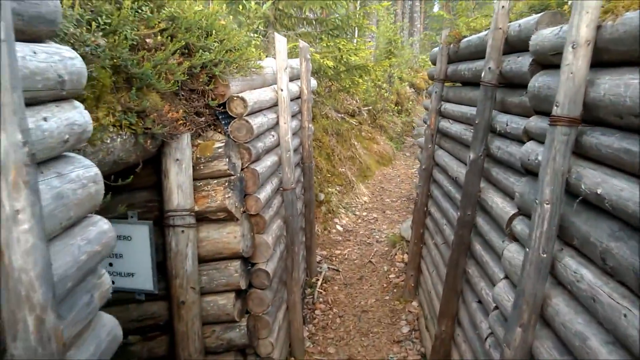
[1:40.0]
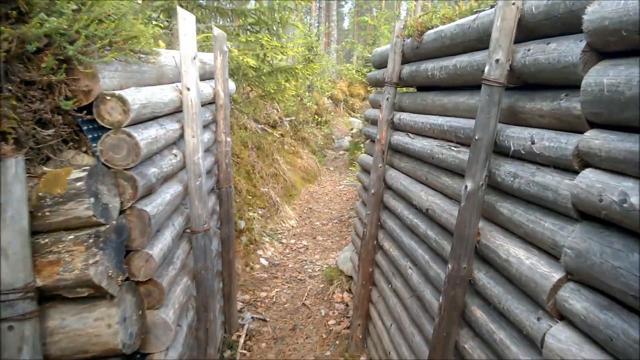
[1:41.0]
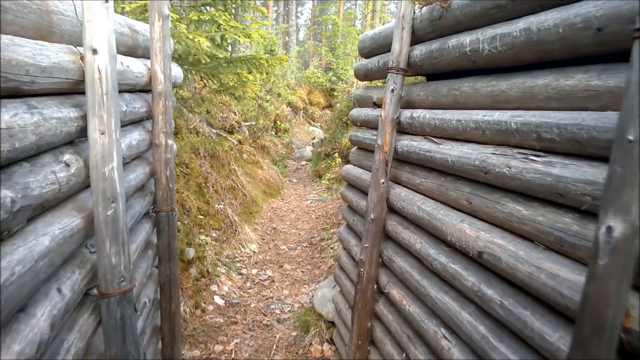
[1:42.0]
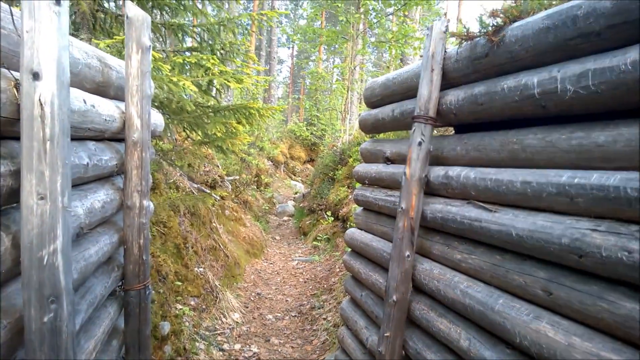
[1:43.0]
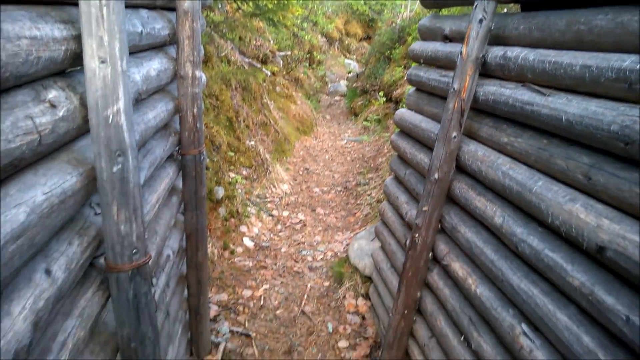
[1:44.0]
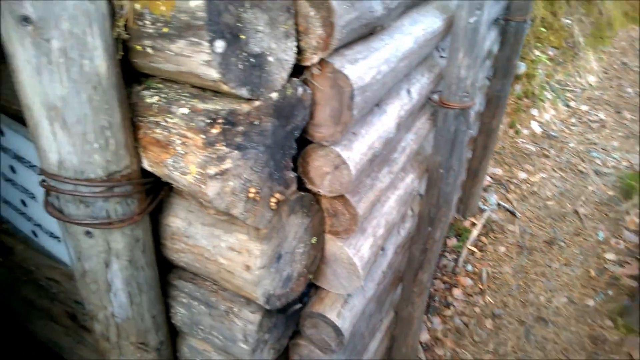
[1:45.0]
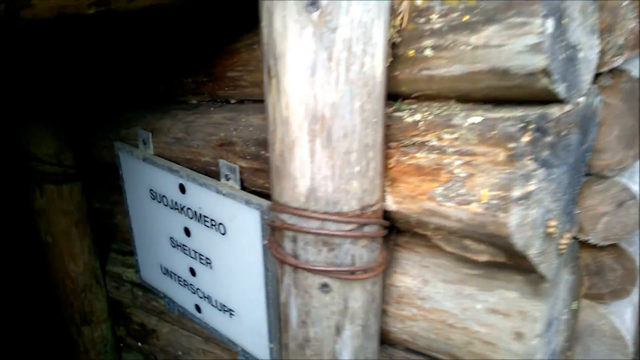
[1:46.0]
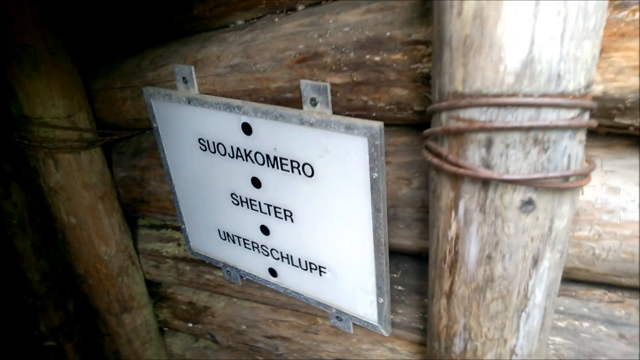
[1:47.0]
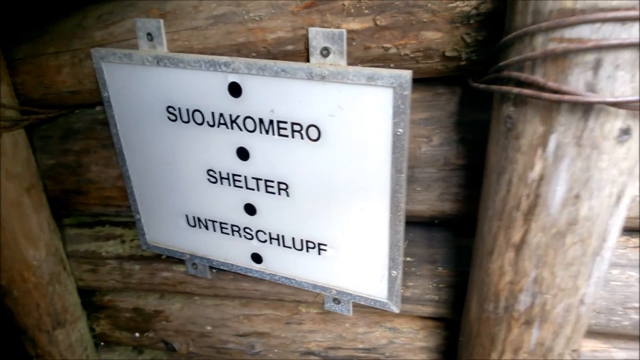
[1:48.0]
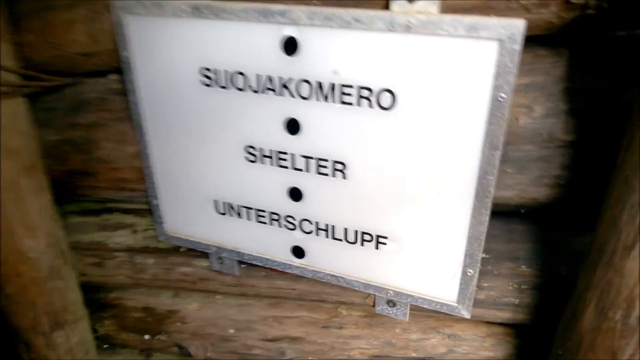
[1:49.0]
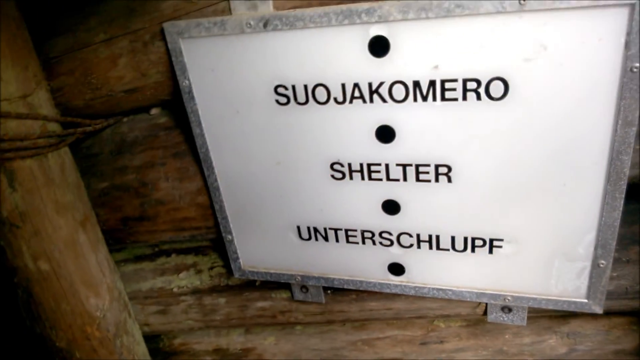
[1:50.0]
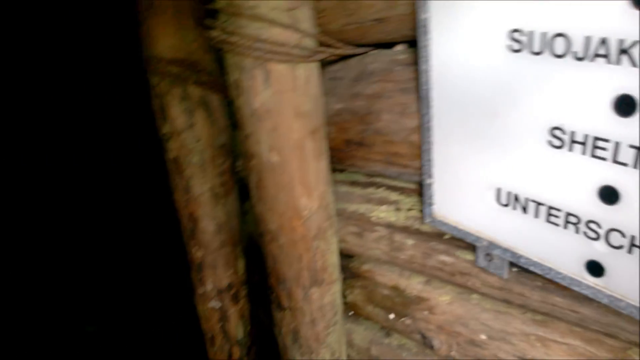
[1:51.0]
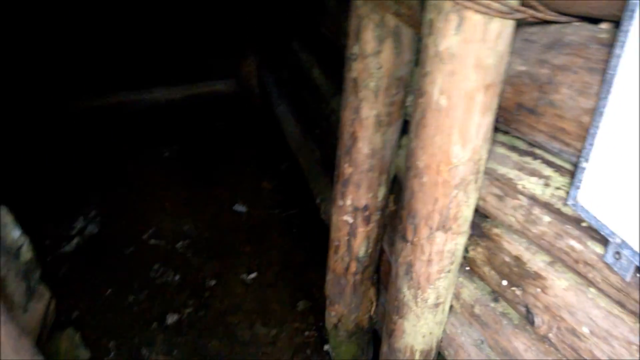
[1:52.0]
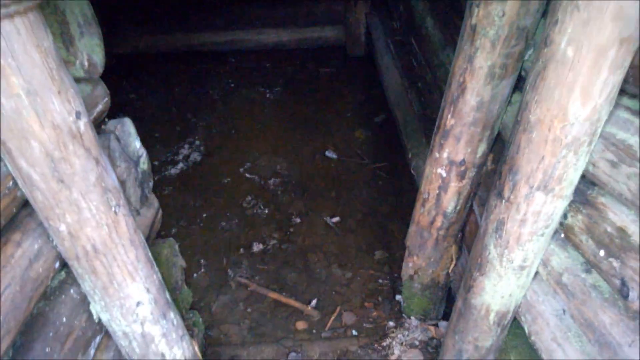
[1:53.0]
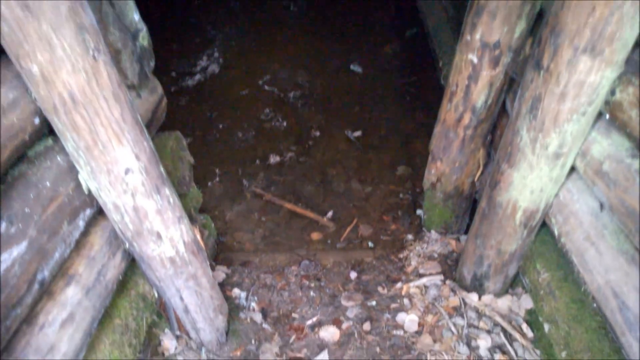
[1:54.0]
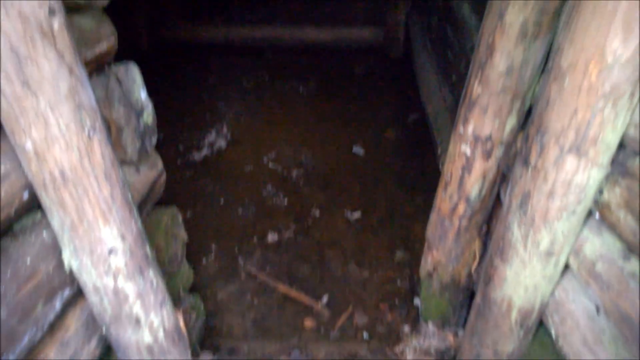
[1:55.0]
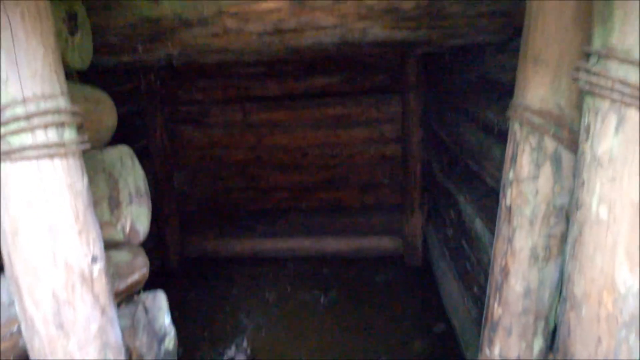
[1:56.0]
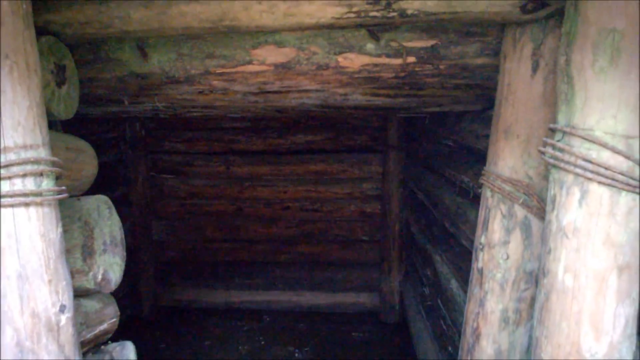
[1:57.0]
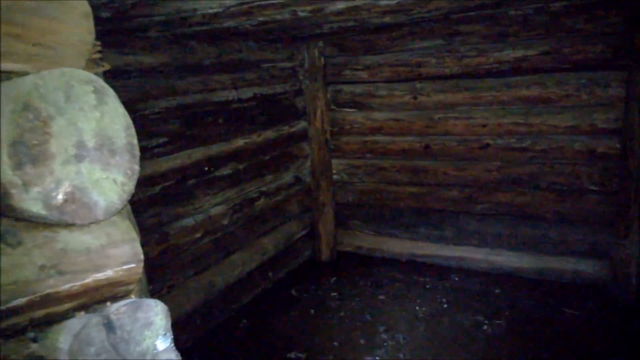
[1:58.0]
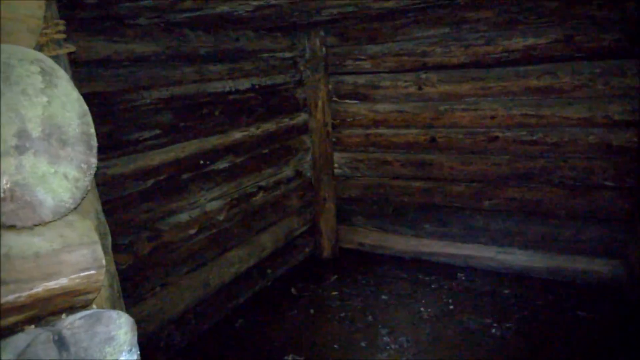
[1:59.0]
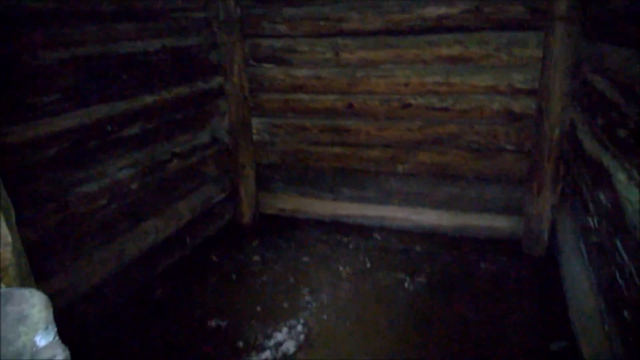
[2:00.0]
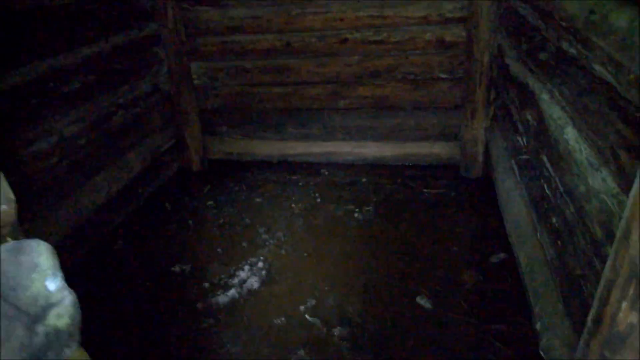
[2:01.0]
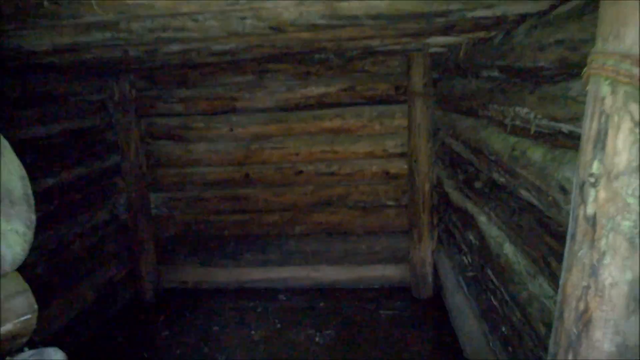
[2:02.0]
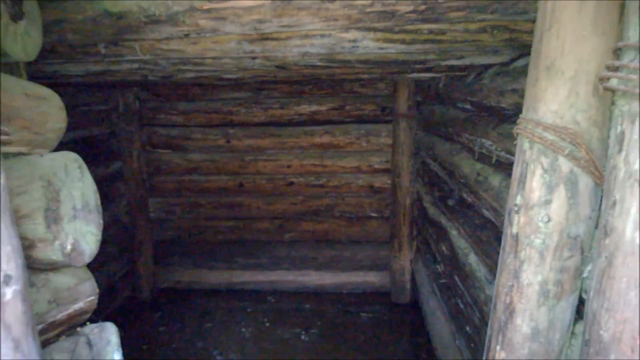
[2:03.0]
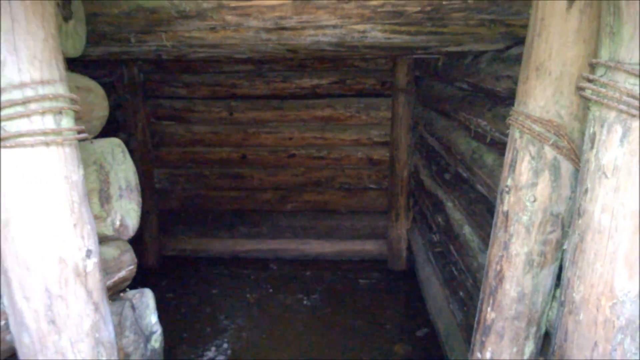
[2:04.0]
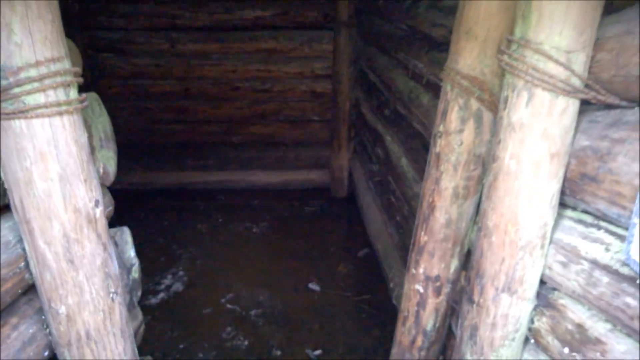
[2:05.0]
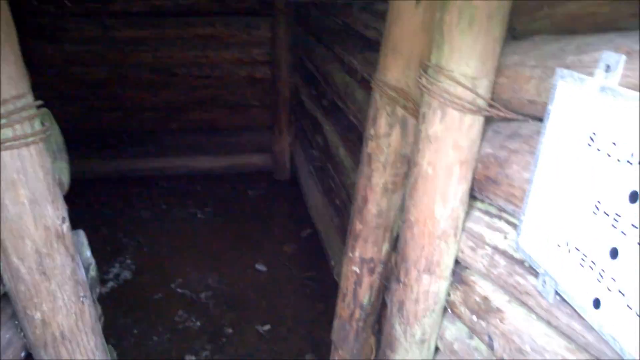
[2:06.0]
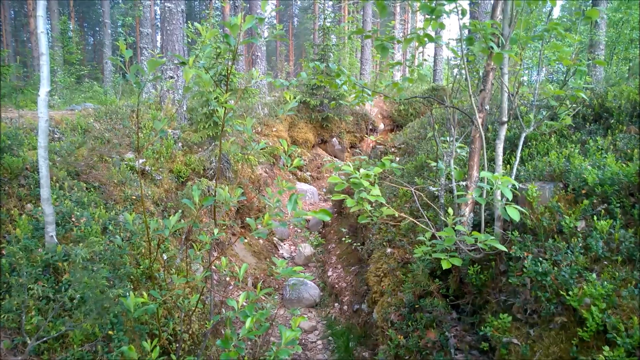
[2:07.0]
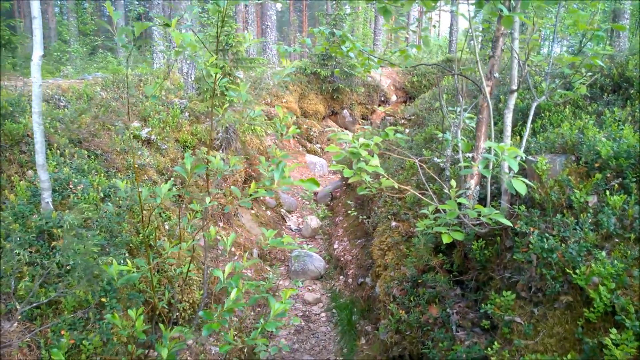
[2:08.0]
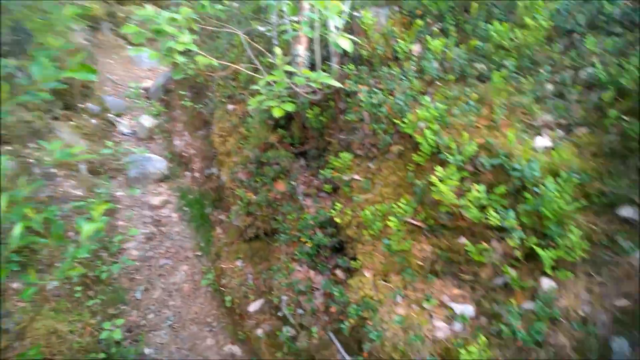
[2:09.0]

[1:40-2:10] The camera walks through the trench until it reaches the end, which kind of just ends in a ditch-like structure. The camera goes back to the sign with three words in three languages, the English word being "shelter", shows a close-up of it, and then shows the shelter. This appears to be a different shelter from the previous one, likely one of multiple shelters in the trench system. It has the same structure: made of wood, with an enclosed roof and only one entrance and exit. This one appears quite small and lacks the supporting beam the other shelter had, and its full extent is visible; it is not very large at all.